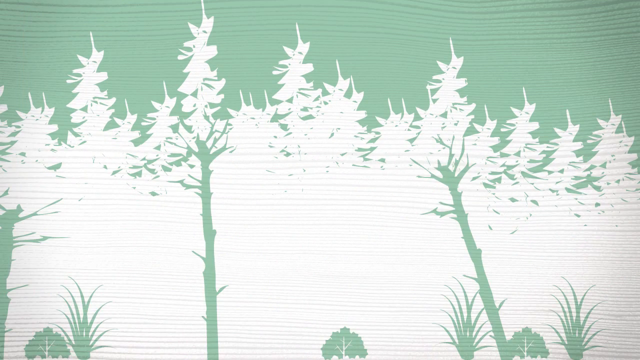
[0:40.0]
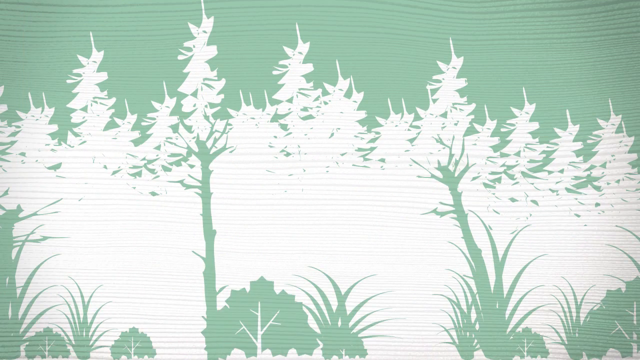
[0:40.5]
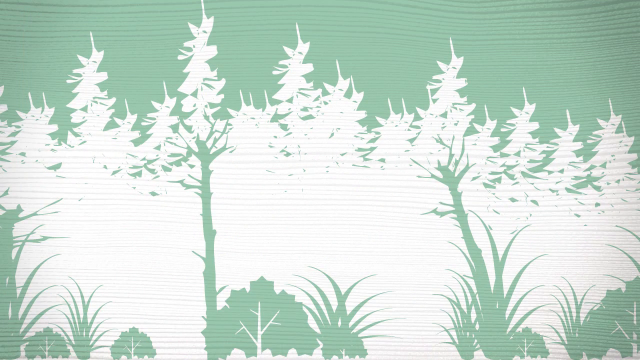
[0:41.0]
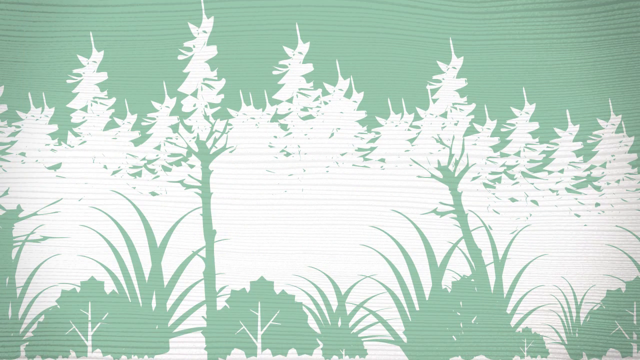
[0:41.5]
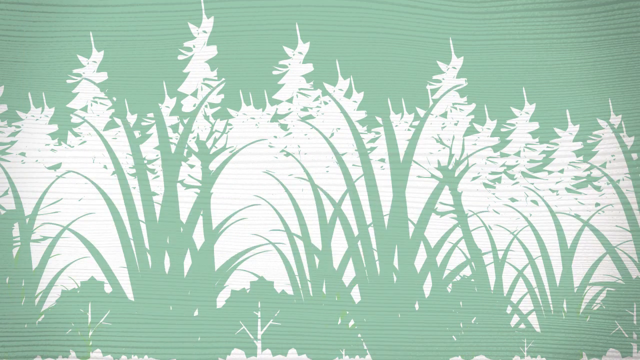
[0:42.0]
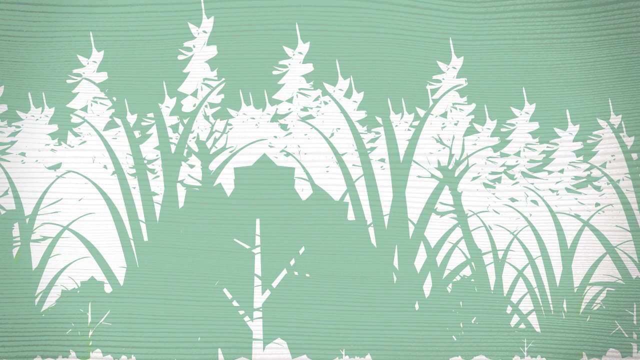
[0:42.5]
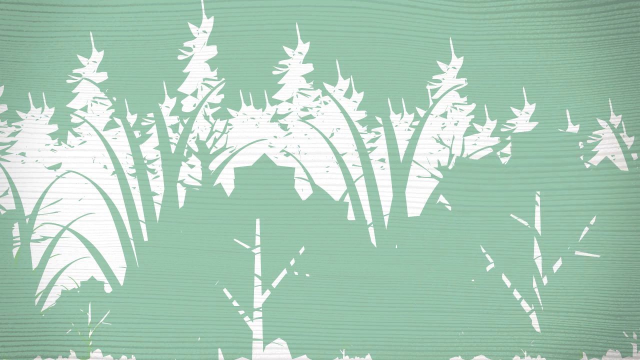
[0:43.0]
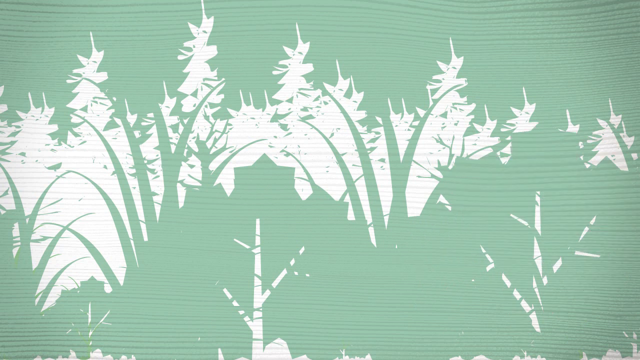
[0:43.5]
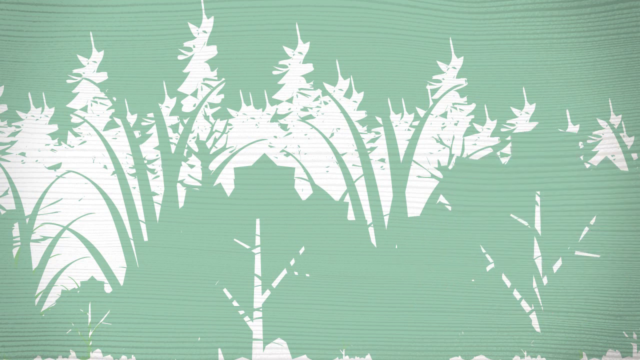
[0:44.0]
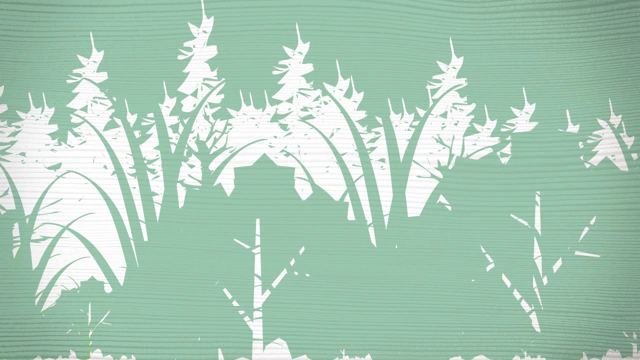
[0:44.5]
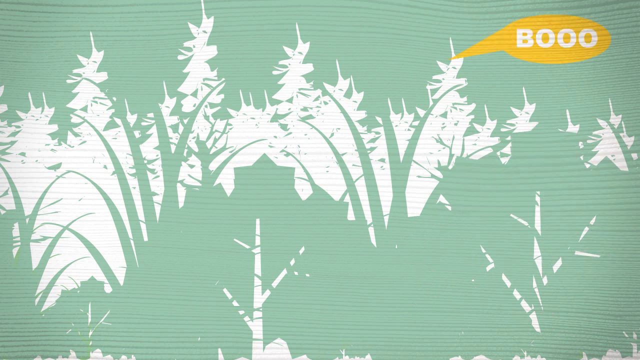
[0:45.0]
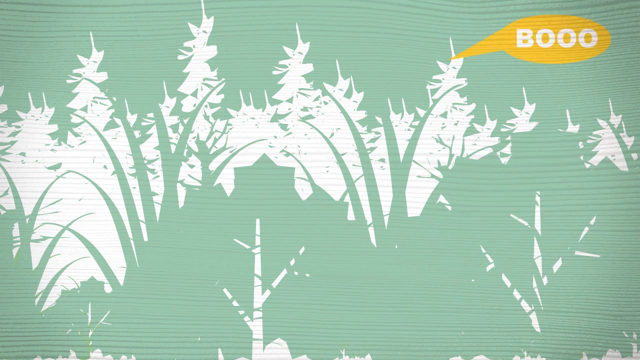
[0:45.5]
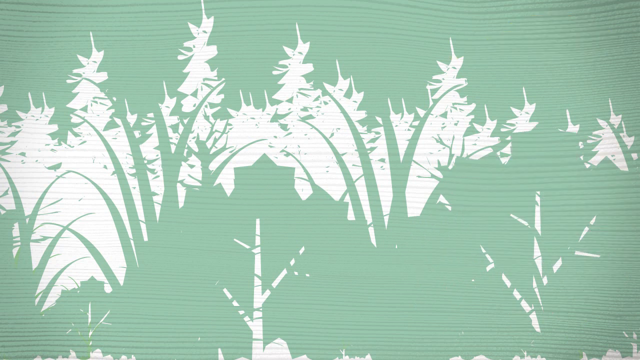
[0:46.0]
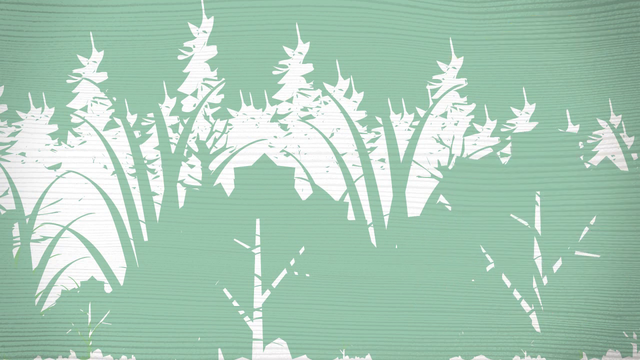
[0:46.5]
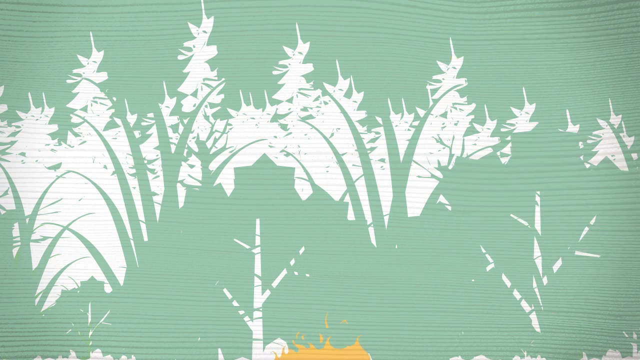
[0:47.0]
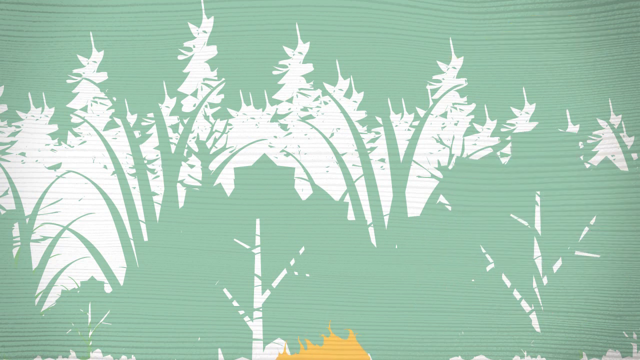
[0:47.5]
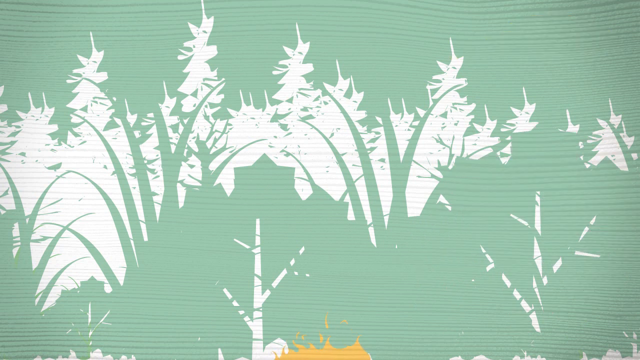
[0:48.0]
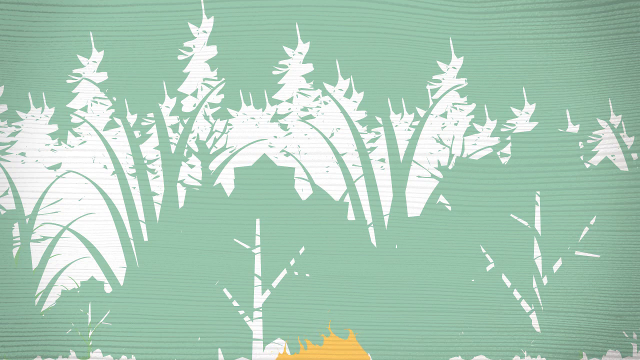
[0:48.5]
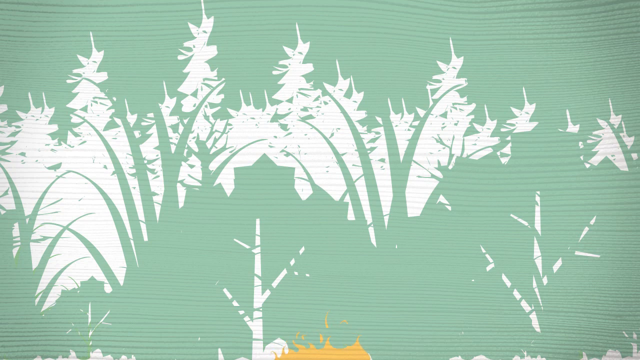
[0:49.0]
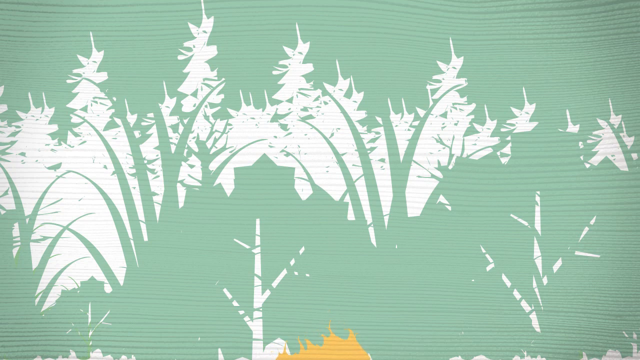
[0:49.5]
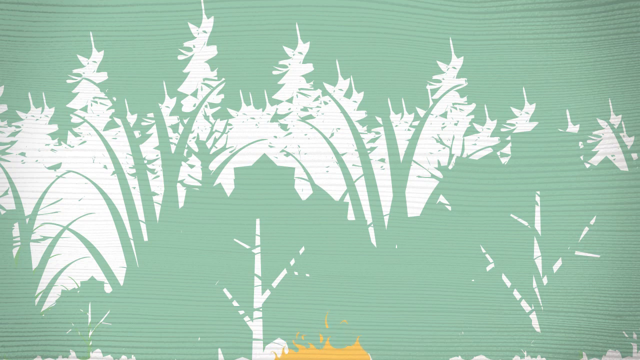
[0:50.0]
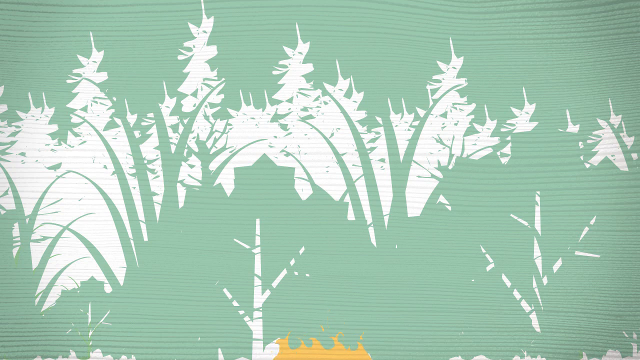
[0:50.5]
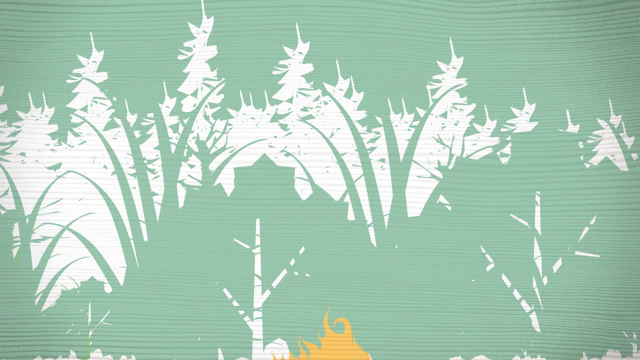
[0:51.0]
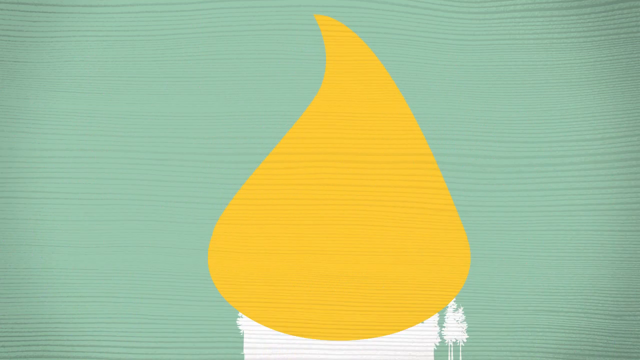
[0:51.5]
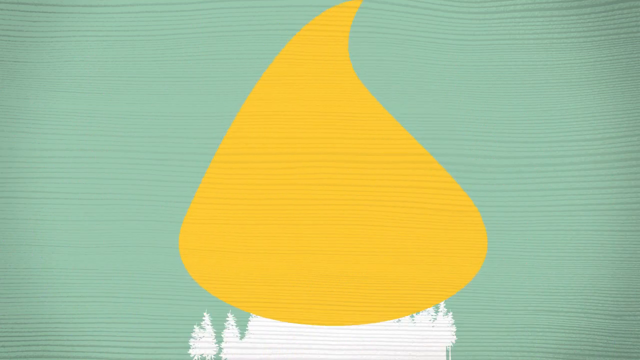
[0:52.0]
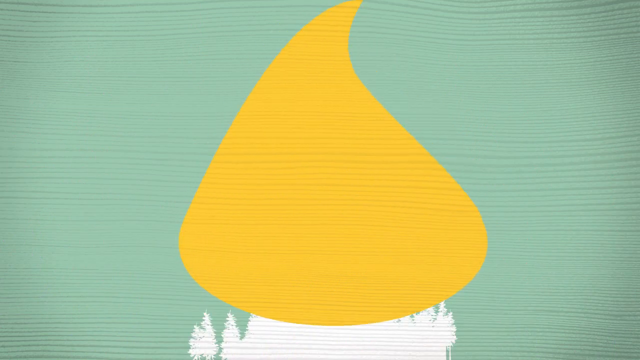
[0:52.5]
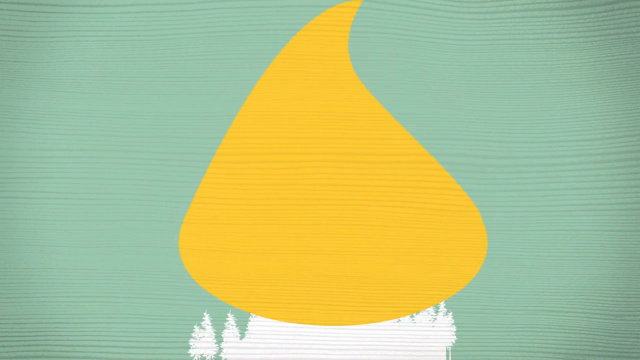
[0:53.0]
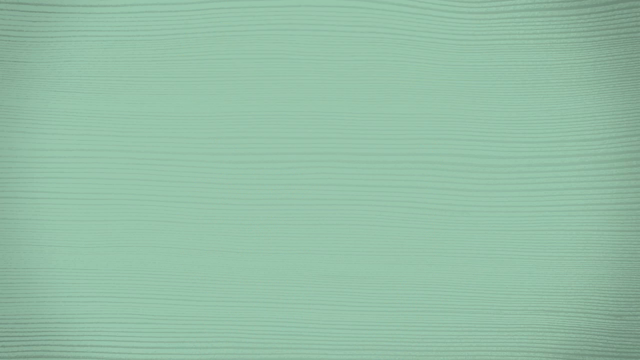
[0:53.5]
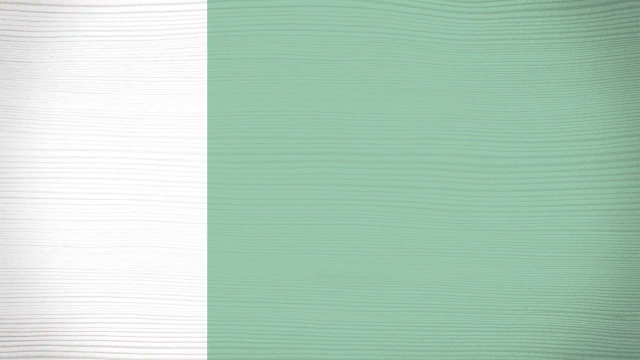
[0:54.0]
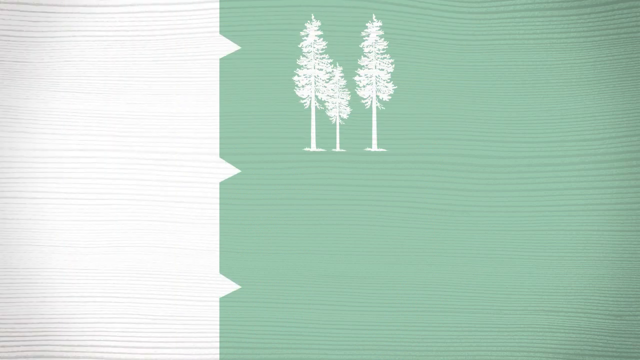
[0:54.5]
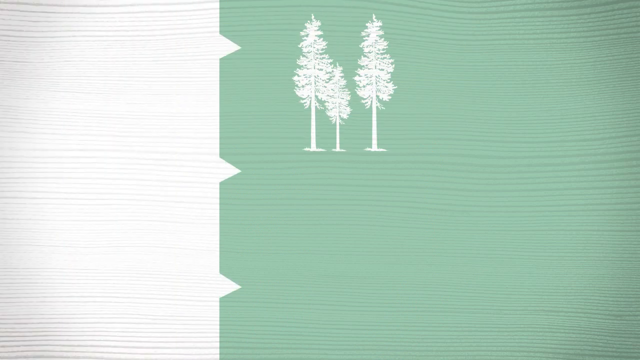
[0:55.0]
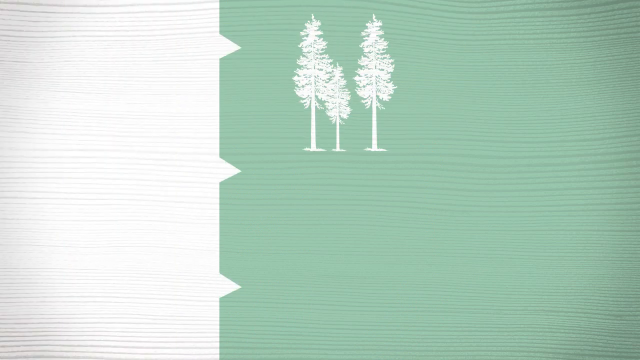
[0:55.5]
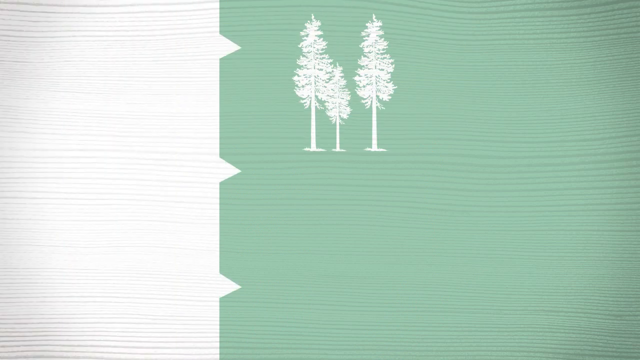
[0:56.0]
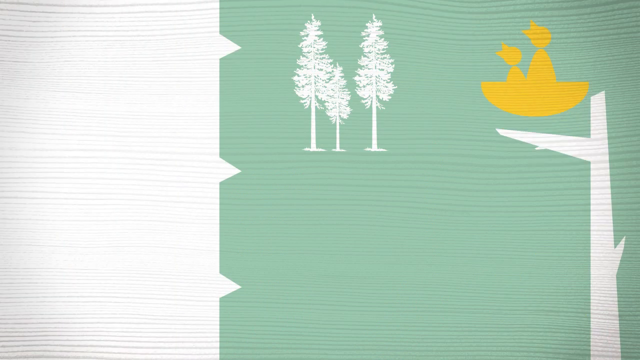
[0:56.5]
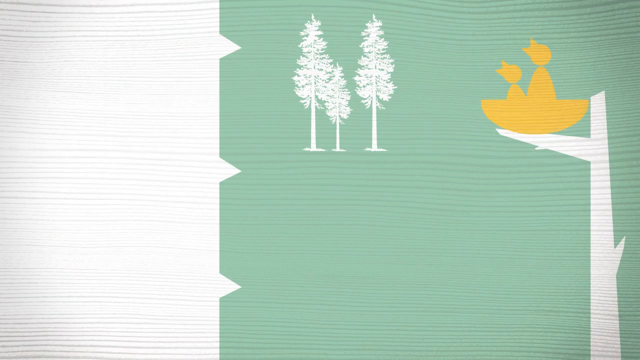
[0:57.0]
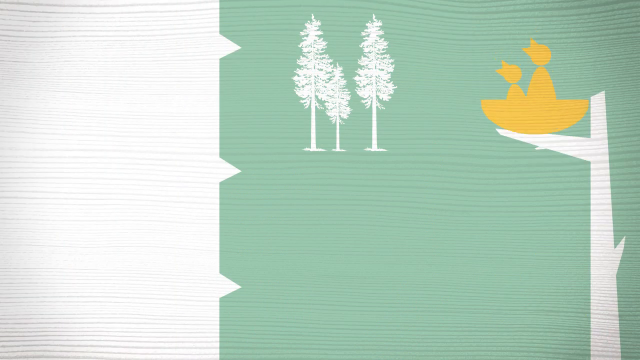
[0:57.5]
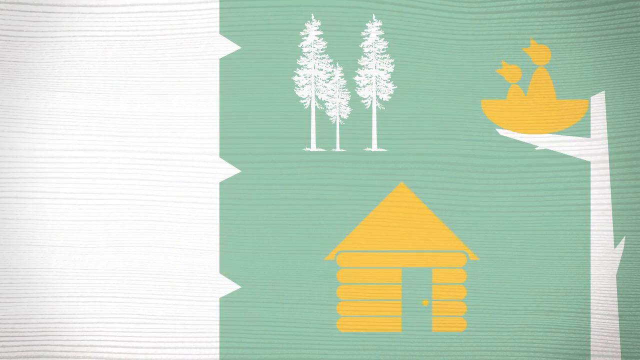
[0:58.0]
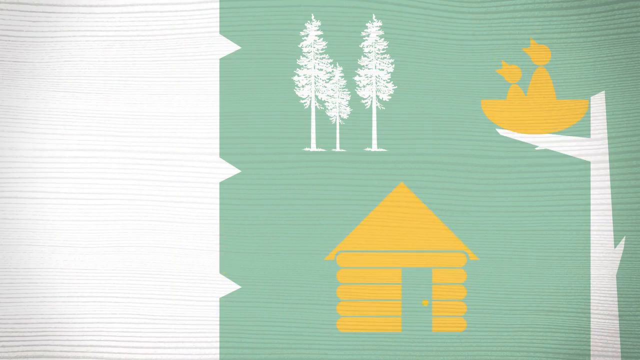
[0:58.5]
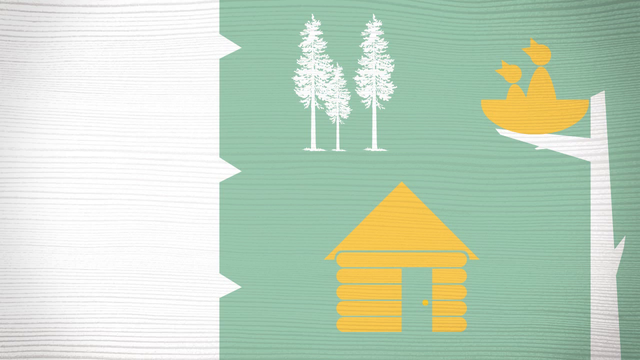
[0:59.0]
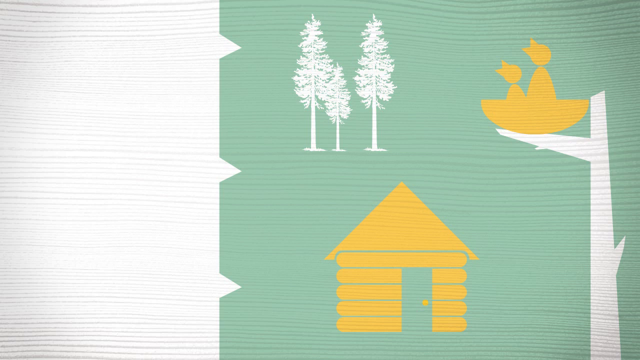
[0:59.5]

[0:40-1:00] White trees continue, this time on a teal background. At the very bottom there is grass with some fallen leaves, and the grass grows taller and taller. Big leaves appear on the grass. An orange chat bubble appears in the top right corner, and at the very bottom of the screen a little forest fire begins to take form. The fire grows big and consumes the huge forest. Next is a half green-teal, half white screen with some trees. On the right side there is a little branch, a little tree where birds have made their nest. An orange cabin house appears, followed briefly by white trees.